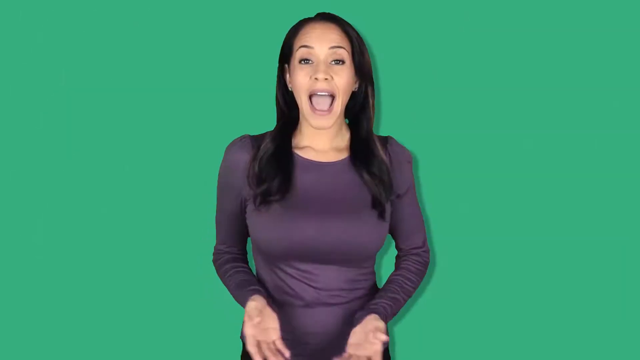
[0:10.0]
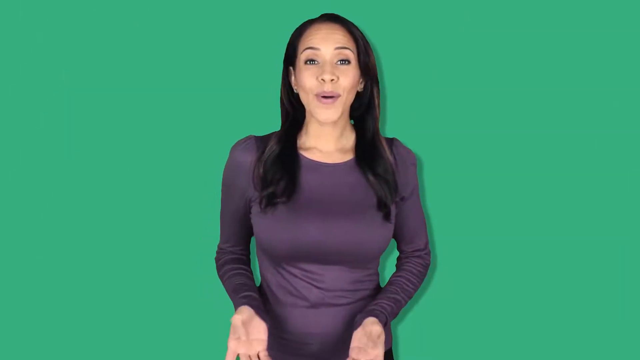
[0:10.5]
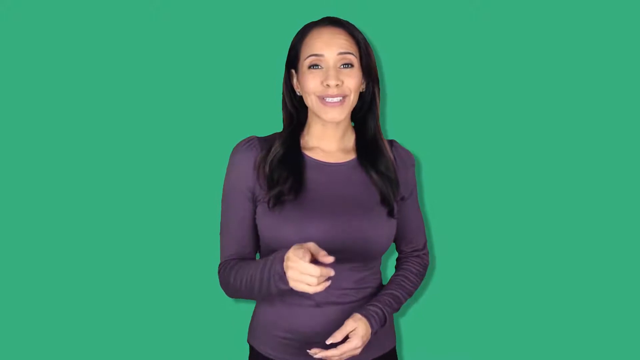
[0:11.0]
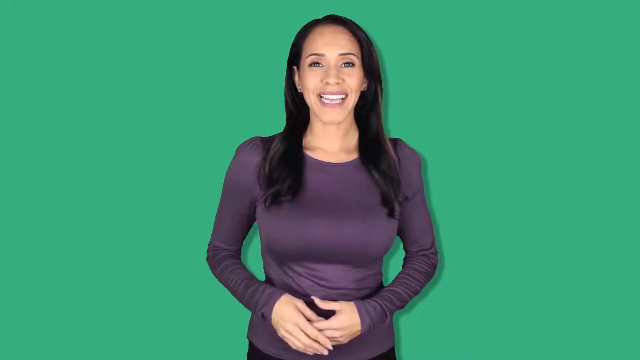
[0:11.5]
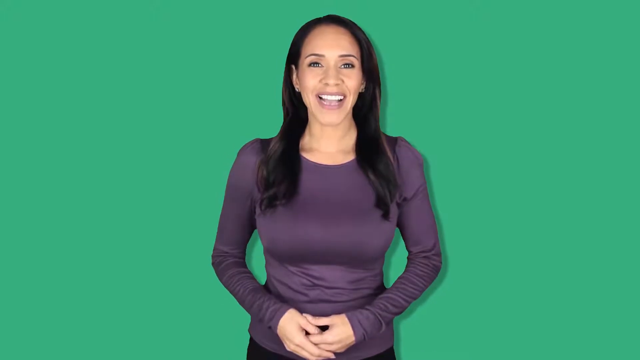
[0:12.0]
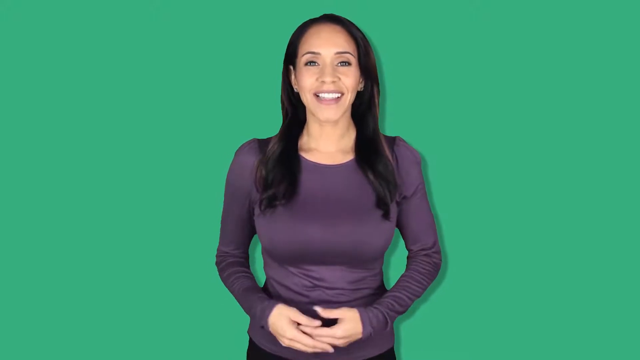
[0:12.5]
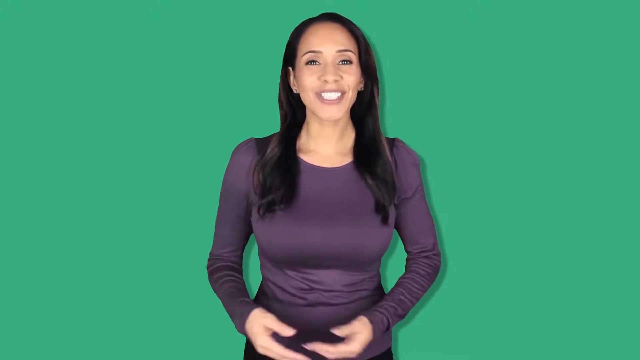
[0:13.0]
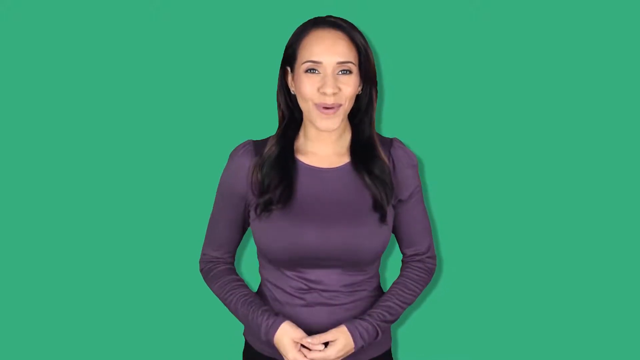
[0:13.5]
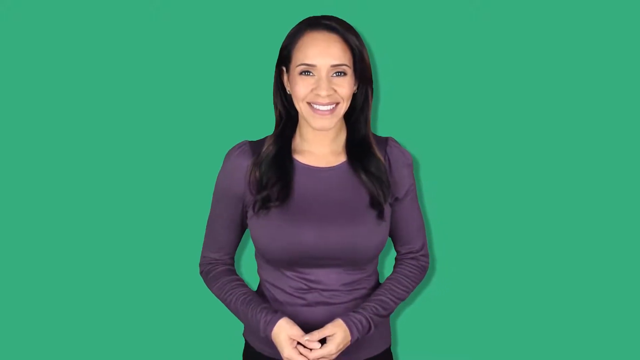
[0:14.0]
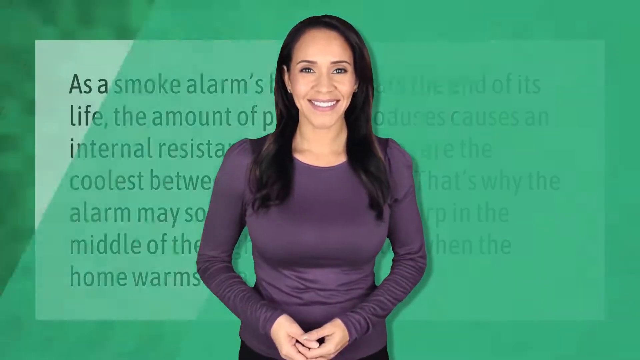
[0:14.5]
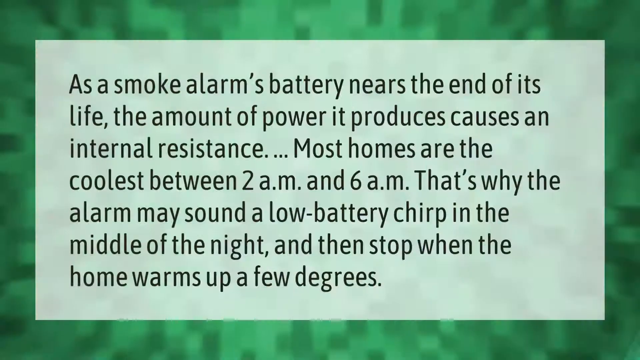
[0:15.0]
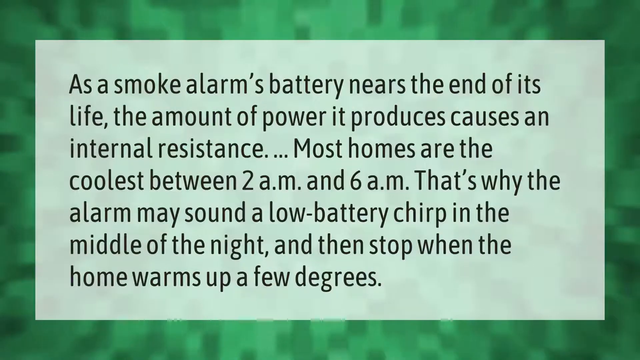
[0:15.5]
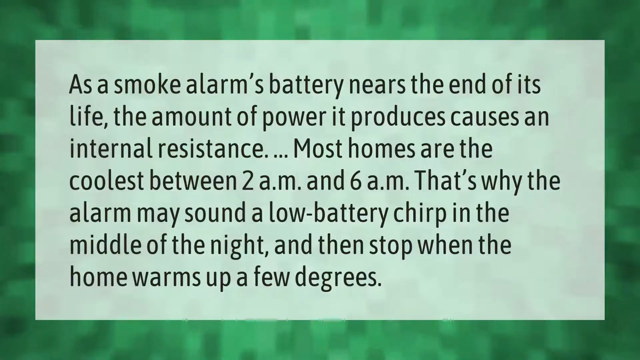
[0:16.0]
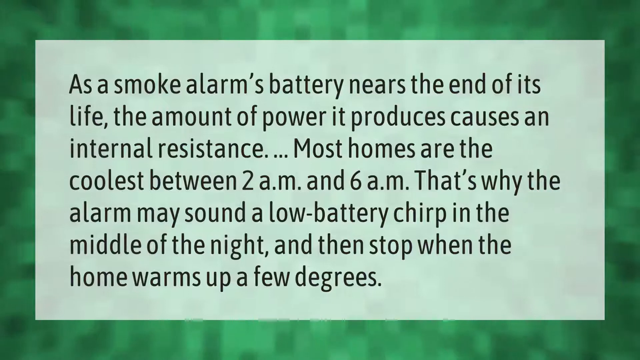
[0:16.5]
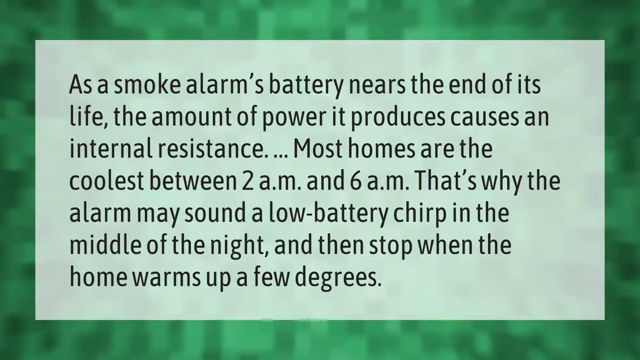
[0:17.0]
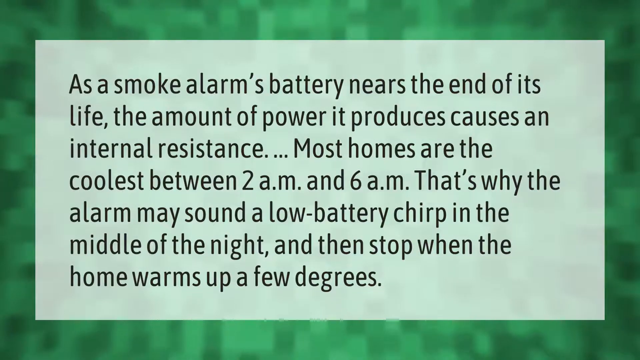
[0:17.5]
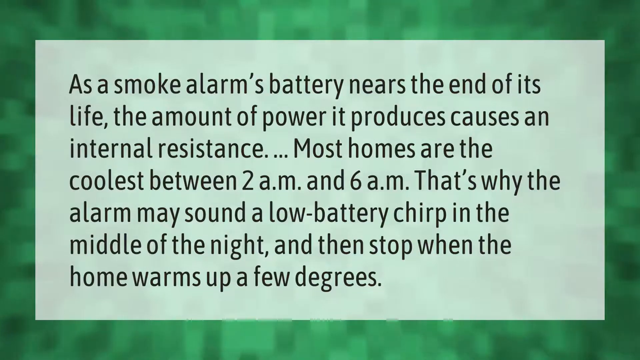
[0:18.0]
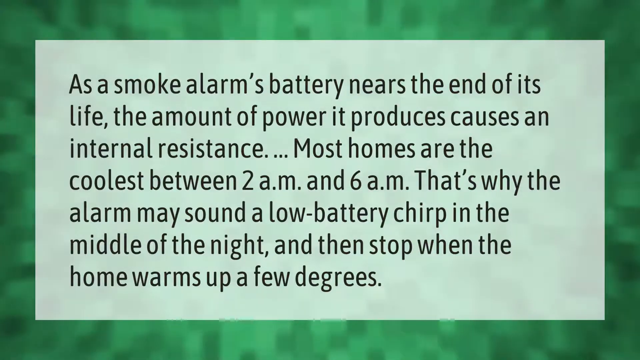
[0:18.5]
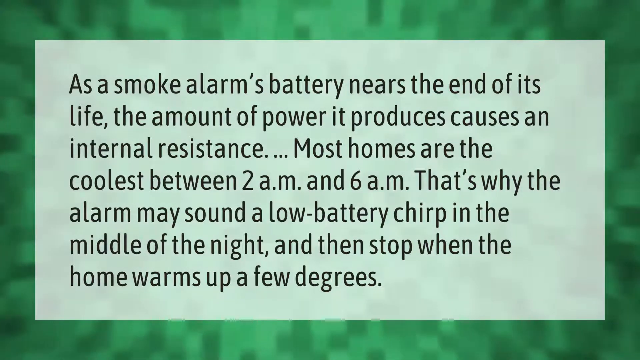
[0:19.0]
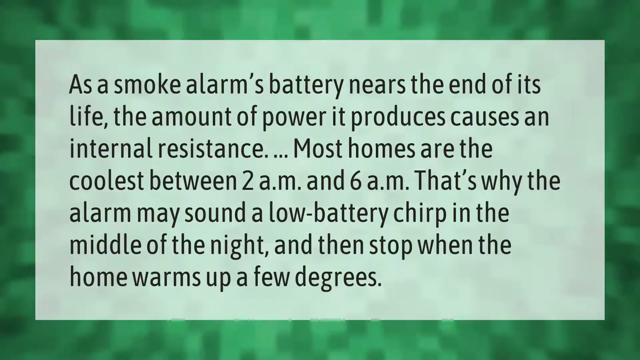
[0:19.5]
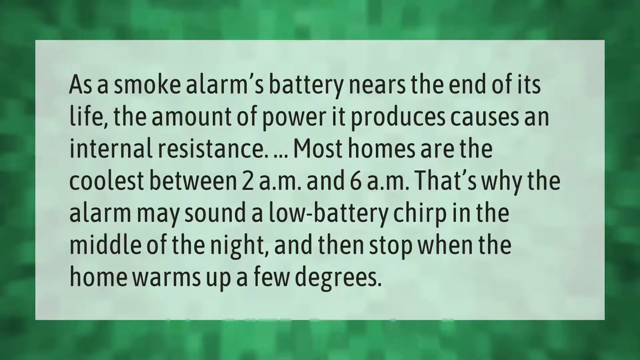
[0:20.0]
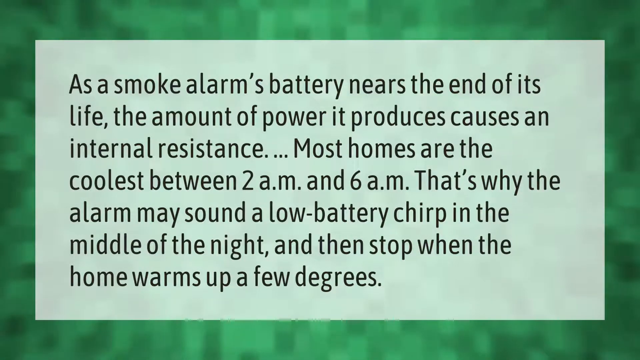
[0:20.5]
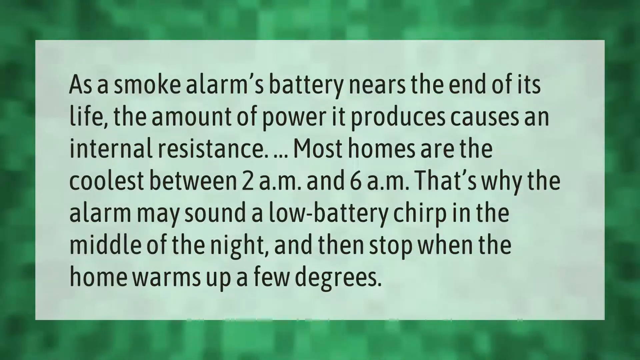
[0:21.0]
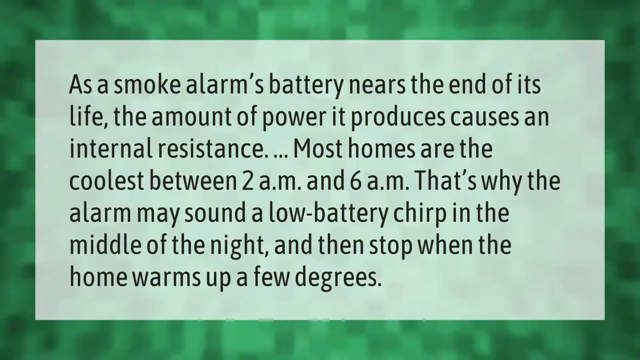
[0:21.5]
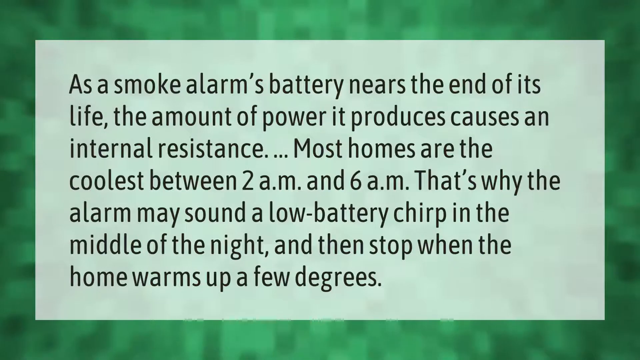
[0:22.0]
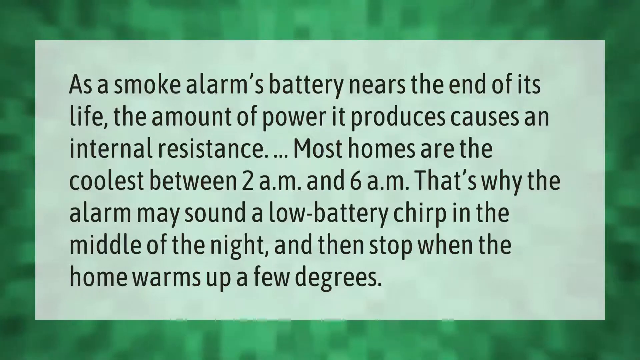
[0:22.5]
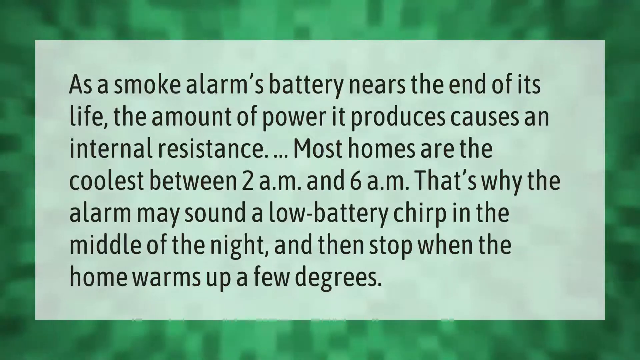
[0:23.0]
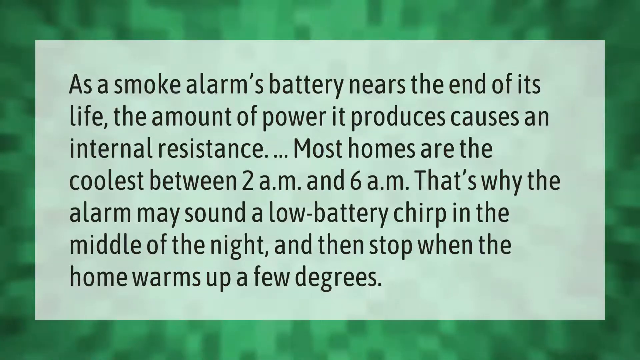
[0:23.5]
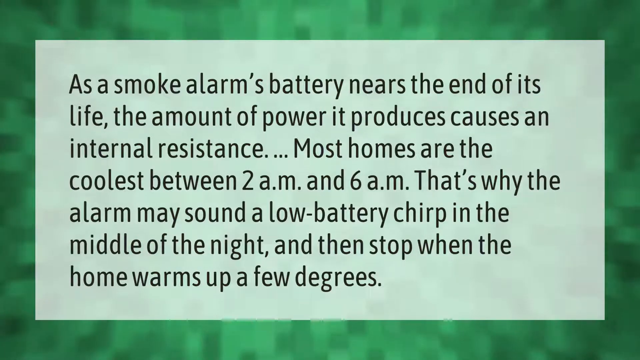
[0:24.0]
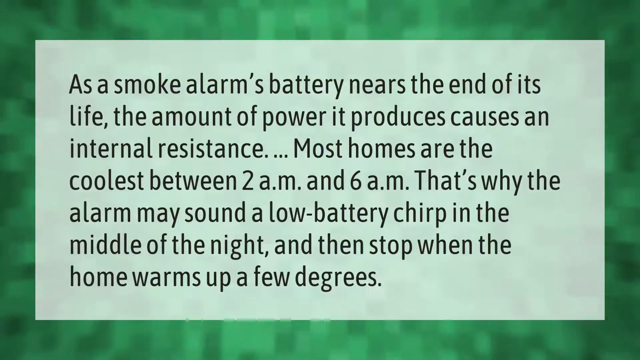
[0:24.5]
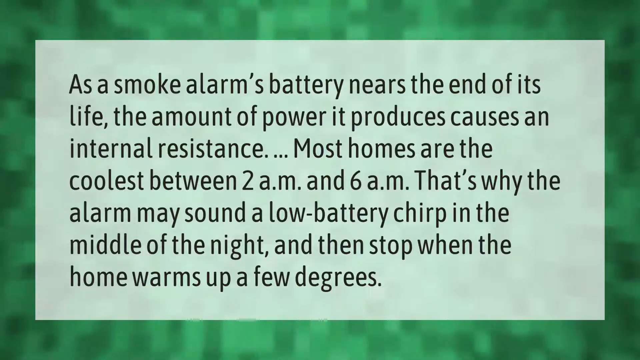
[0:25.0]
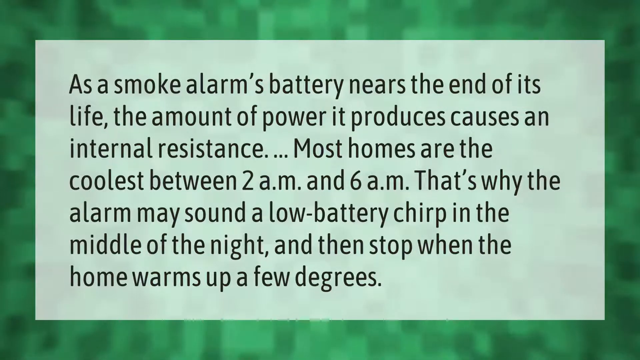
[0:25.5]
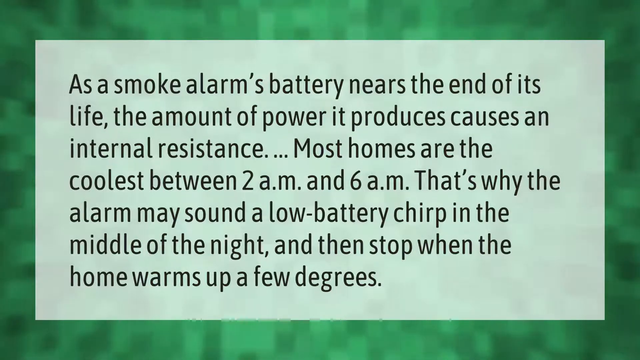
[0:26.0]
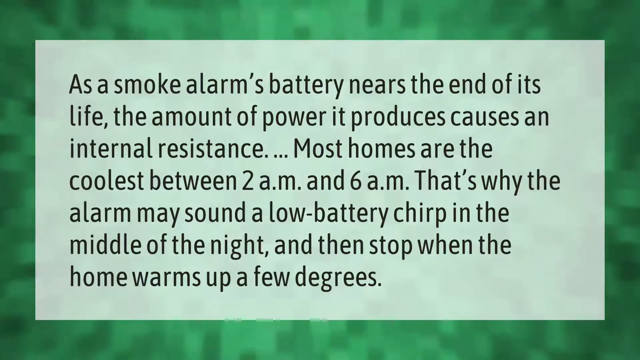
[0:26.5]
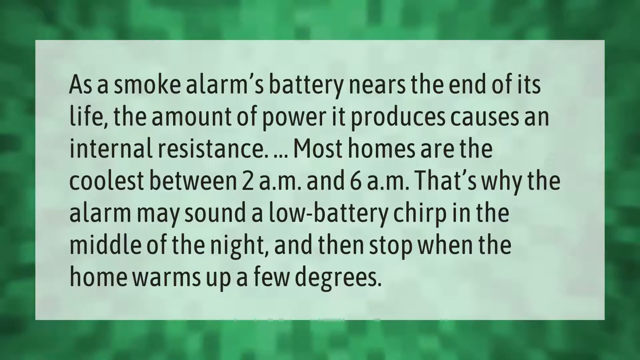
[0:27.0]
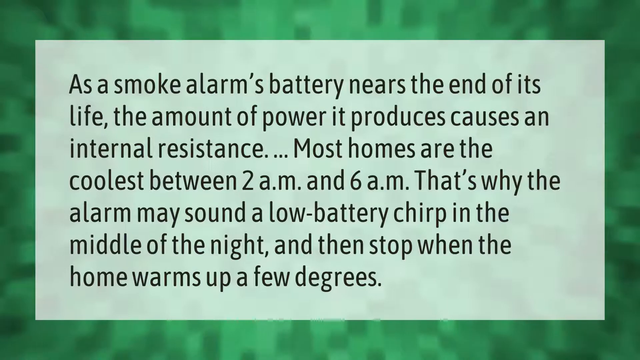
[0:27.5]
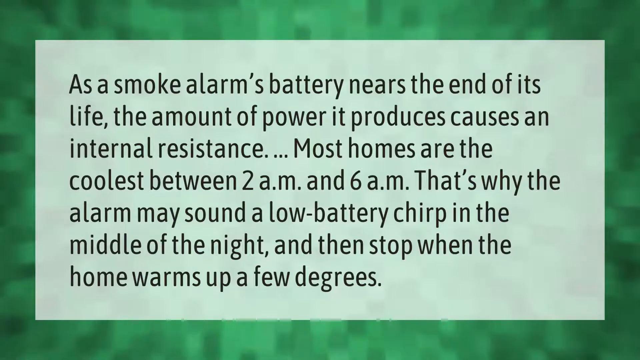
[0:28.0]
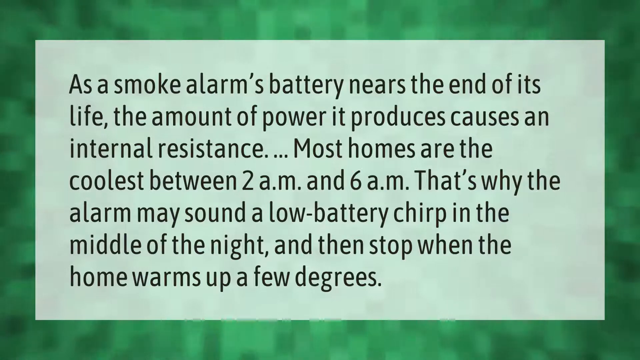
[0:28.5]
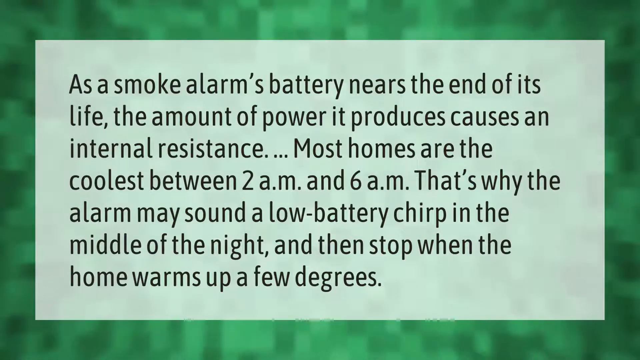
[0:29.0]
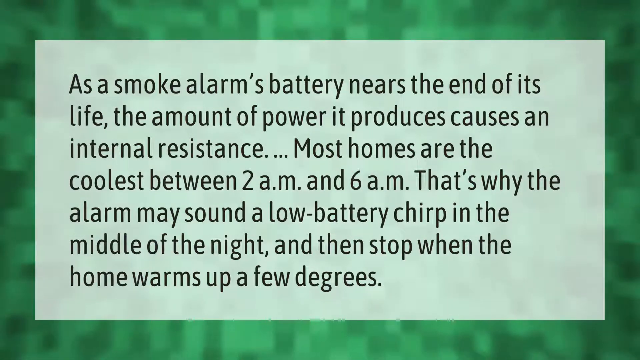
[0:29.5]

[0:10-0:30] The woman stands in front of the green backdrop, wearing a purple shirt, with long brown hair. She smiles and speaks intently toward the camera. It then slides to the next slide: a green backdrop with a light green area bearing black text that says "As a smoke alarm's battery nears the end of its life, the amount of power it produces causes an internal resistance... Most homes are the coolest between 2am and 6am, that's why the alarm may sound a low battery chirp in the middle of the night and then stop when the home warms up a few degrees." The screen stays on this text for a little while.